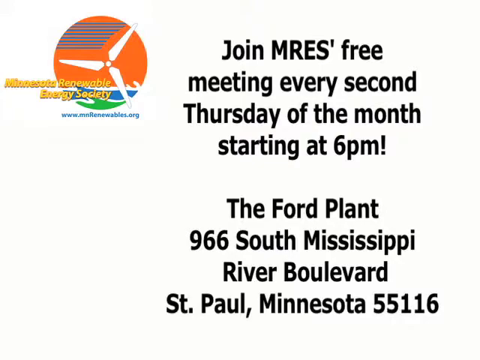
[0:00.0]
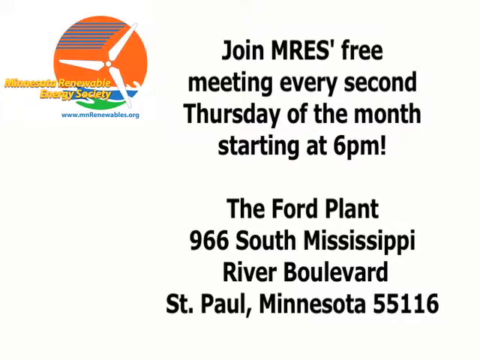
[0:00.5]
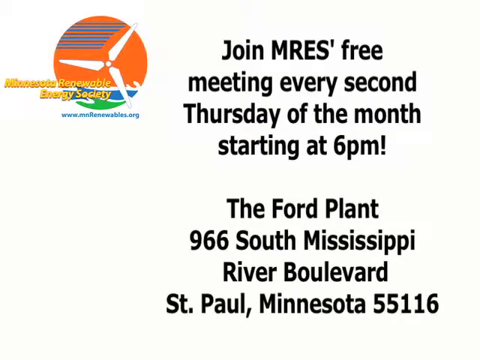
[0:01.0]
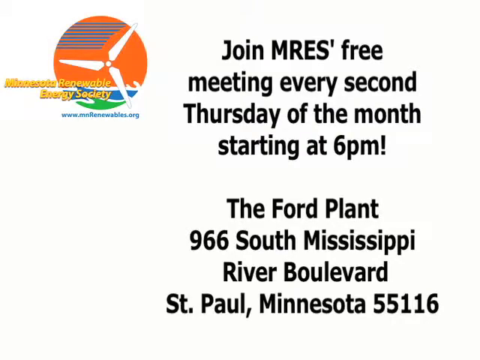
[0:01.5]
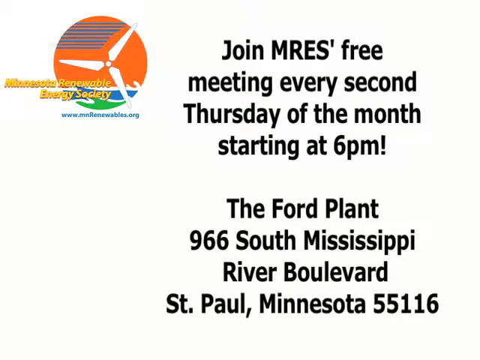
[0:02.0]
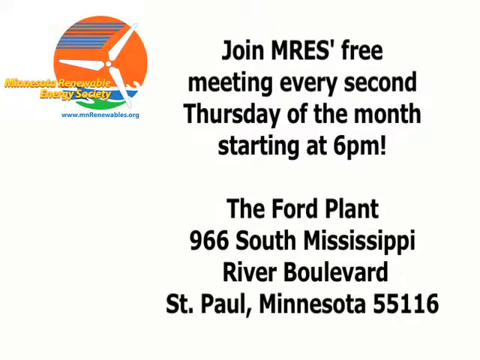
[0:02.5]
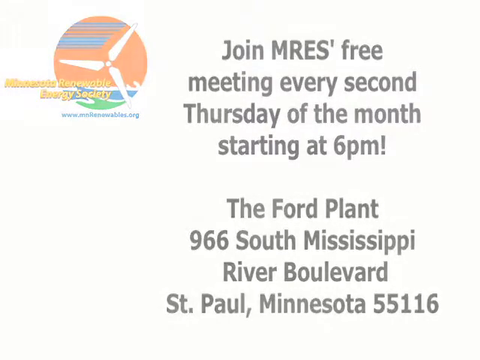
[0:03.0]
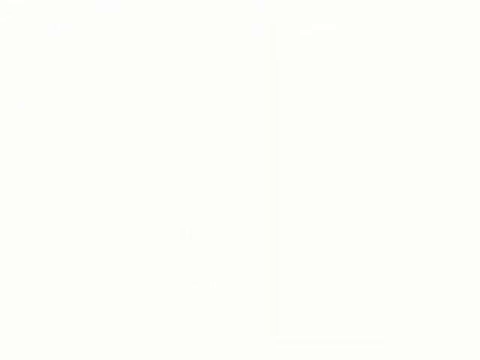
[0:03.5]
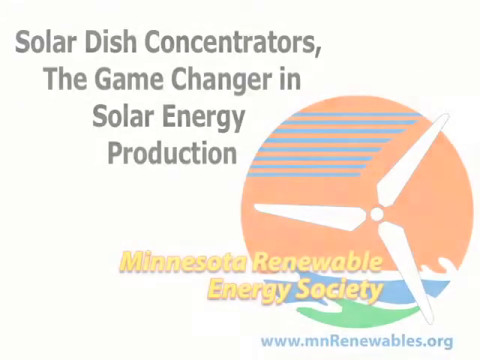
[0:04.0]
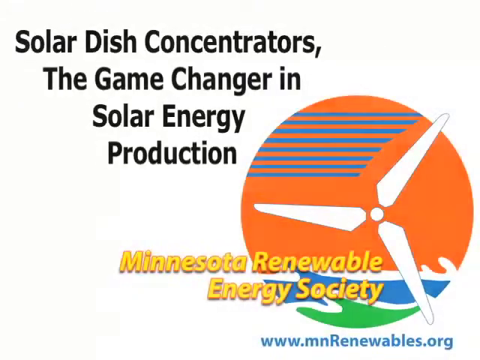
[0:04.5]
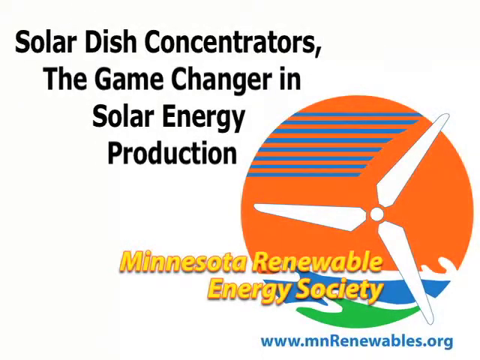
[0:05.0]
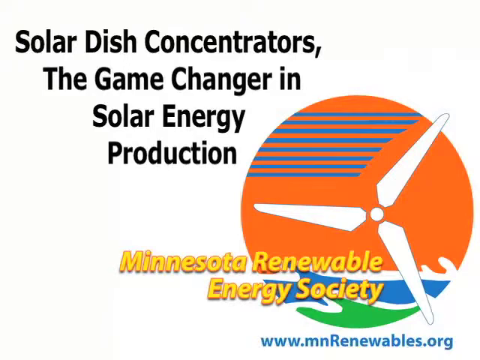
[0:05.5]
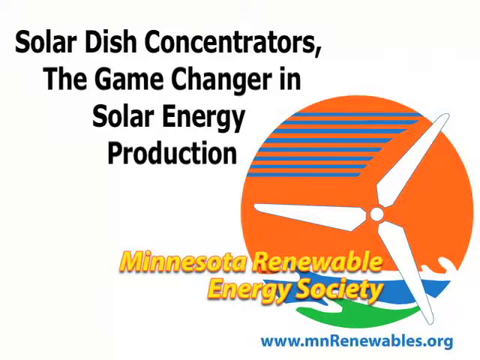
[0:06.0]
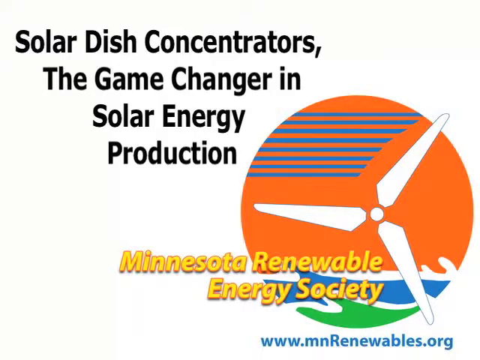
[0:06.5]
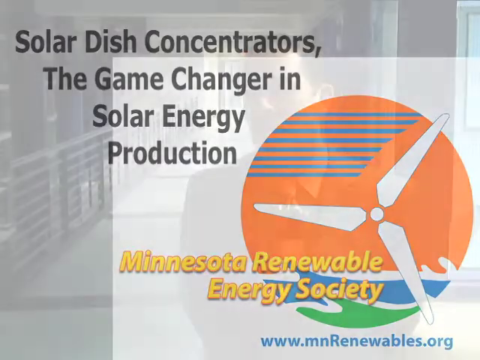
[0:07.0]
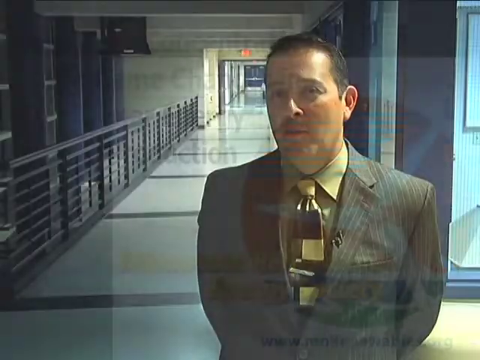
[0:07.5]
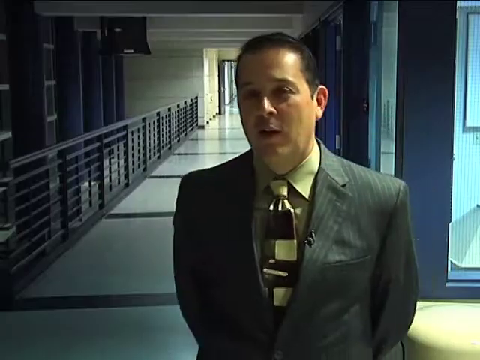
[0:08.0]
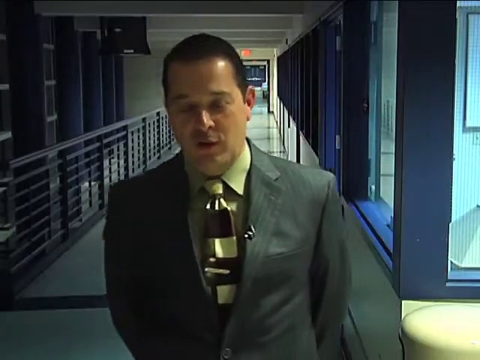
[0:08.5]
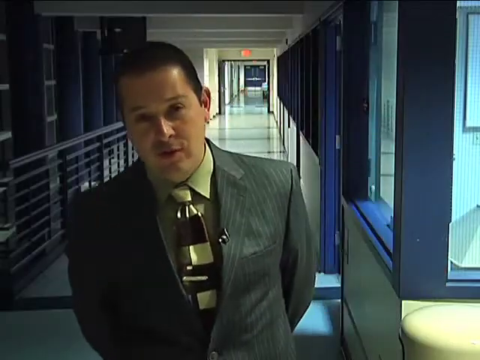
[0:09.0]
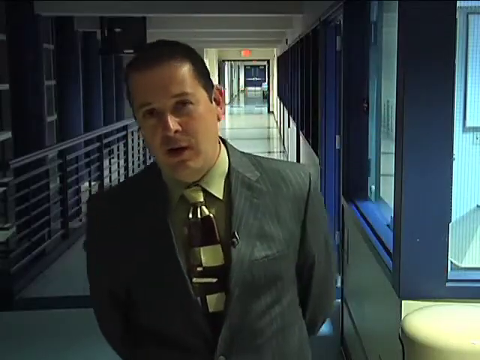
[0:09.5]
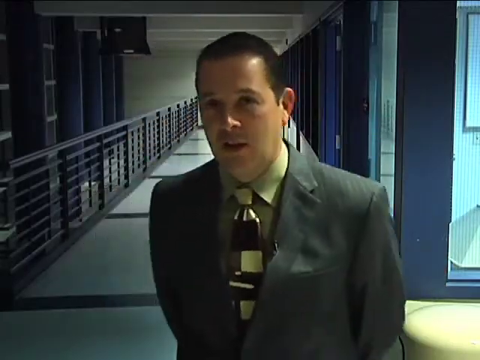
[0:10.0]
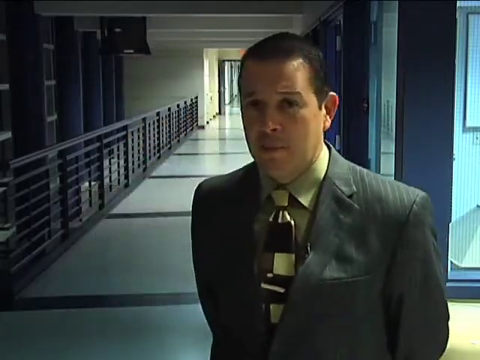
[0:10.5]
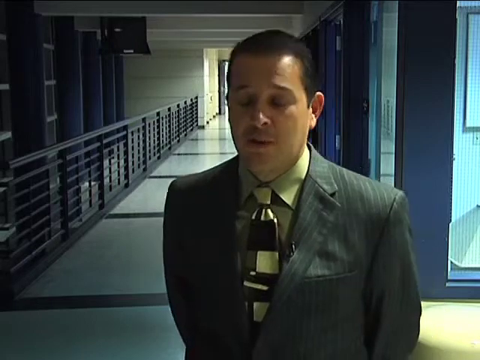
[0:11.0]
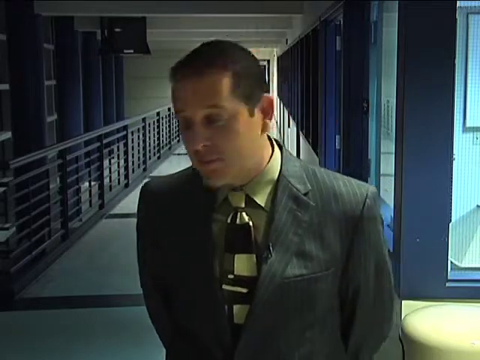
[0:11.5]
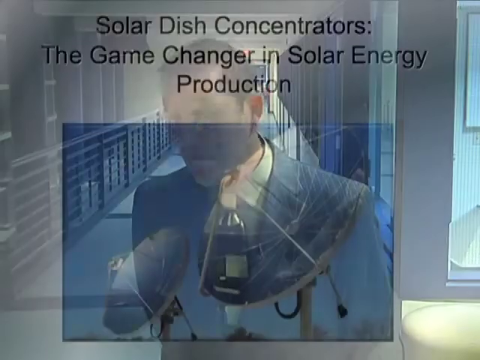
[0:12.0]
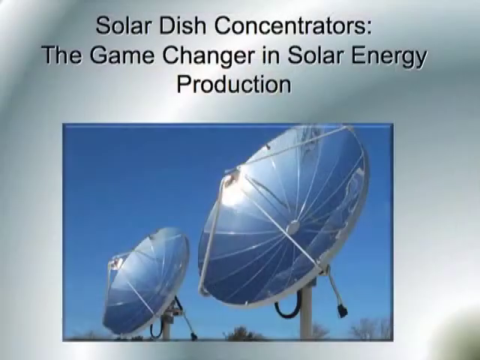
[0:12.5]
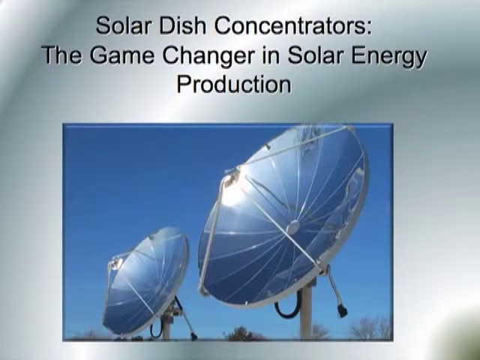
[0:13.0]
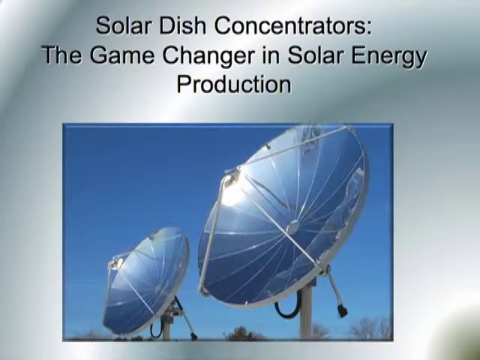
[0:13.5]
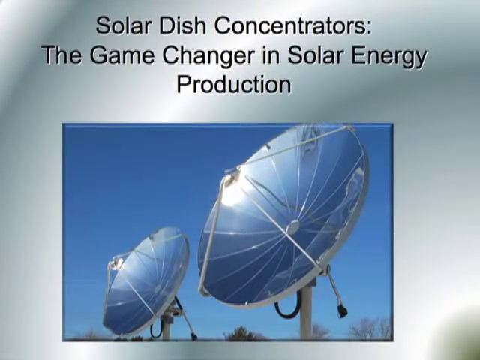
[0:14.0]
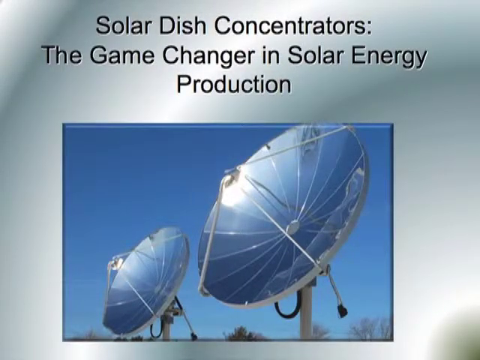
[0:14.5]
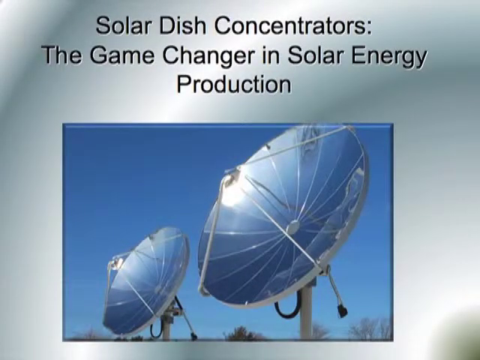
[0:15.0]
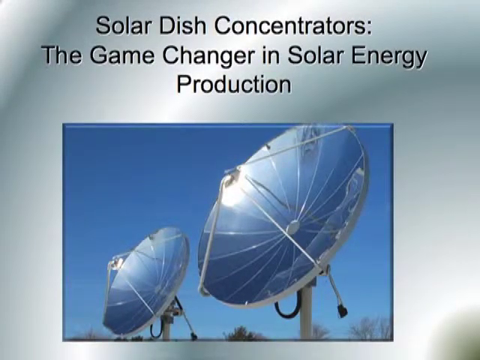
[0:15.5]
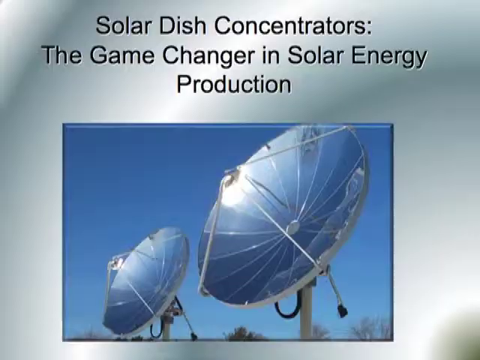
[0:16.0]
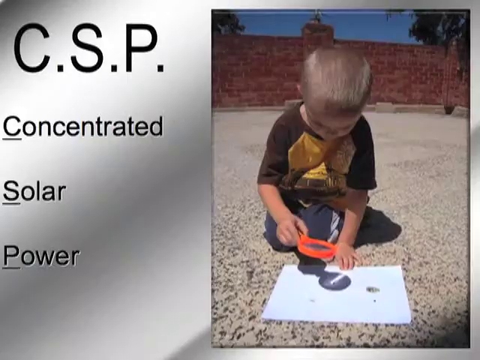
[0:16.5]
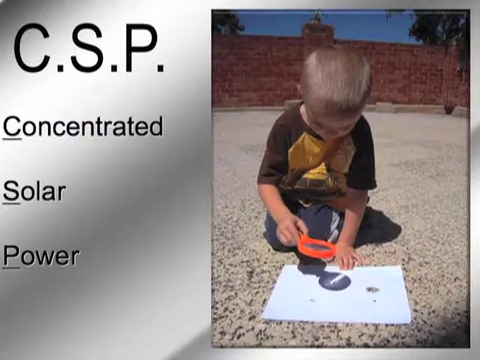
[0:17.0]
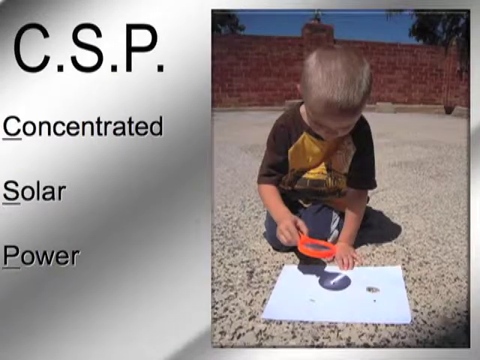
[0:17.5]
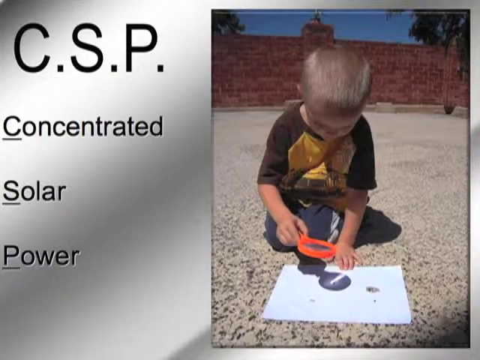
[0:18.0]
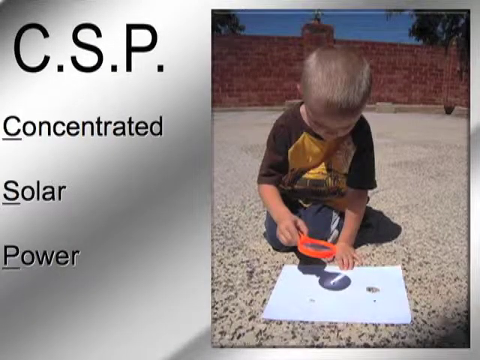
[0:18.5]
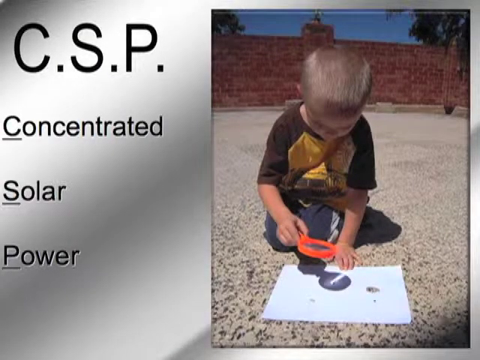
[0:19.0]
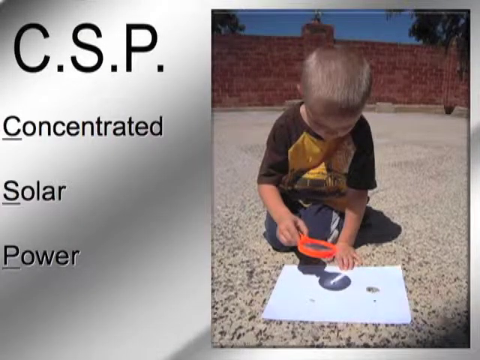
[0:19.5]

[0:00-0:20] The video opens with a slider reading "join MERS for free," apparently about a cause such as global warming or energy. The text is in black lettering with some animation around it. On the left is an orange circle containing an illustration in which some wings are visible, along with a little blue representing the ocean and green representing land. Text reads "Minnesota Renewable Energy Society" and "join MERS free meetings every second Thursday of the month, starting at 6 PM," followed by the address "966 South Mississippi River Boulevard, St. Paul, Minnesota, 55116." After this invitation, the orange circle appears again with text mentioning a concentrator. A gentleman is then shown standing in some type of building, possibly on the second floor, with a lot of blue paint on the walls. He seems to be in his late 30s or early 40s, Caucasian with dark hair, wearing a grayish suit, an olive-colored shirt and a colorful tie. He appears for only about a second before large solar dishes are shown. The dishes are very large, bluish and close to each other; one is large and one is small or medium. Text calls them "game changers." The last part shows more information about the organization, and on the right is a picture of a little boy sitting on the ground, apparently about three or four years old. His face cannot be seen because he is looking down; he looks like he is trying to color something. Most of his body is visible.